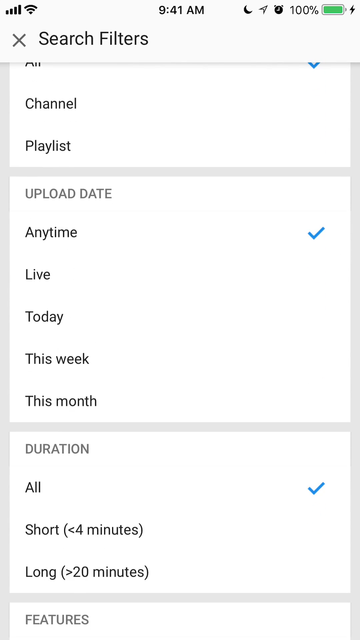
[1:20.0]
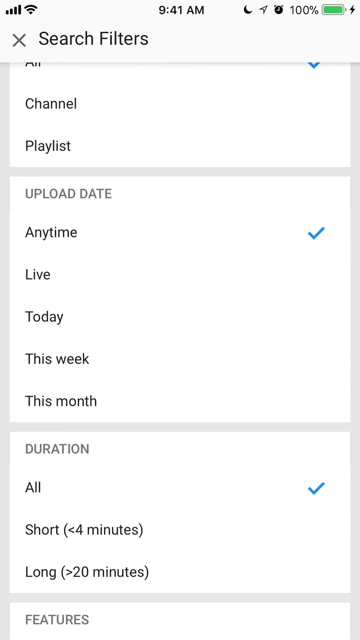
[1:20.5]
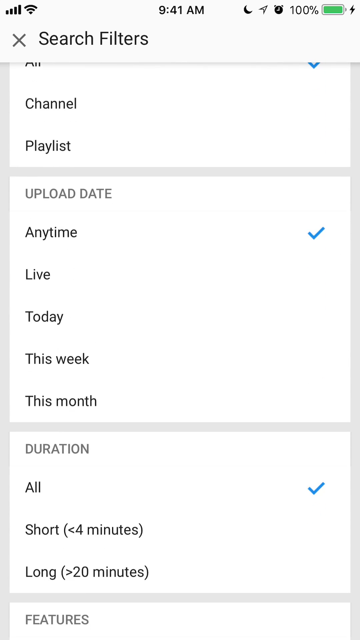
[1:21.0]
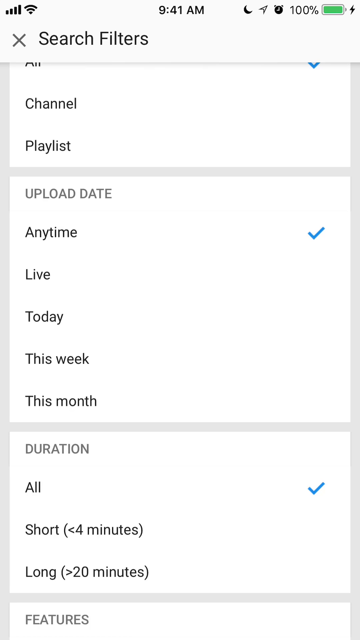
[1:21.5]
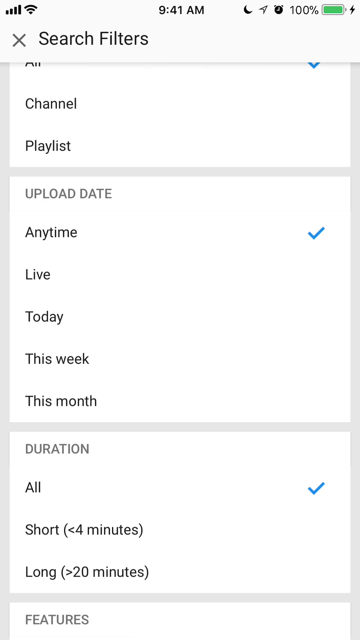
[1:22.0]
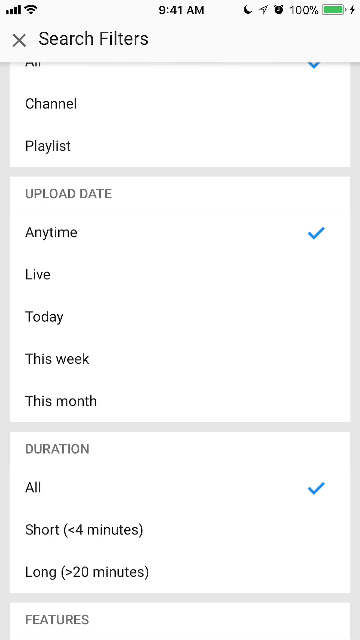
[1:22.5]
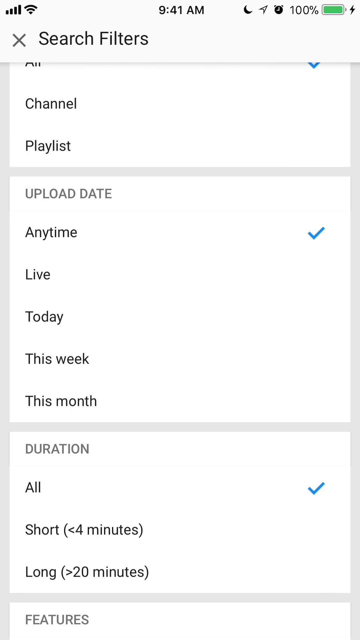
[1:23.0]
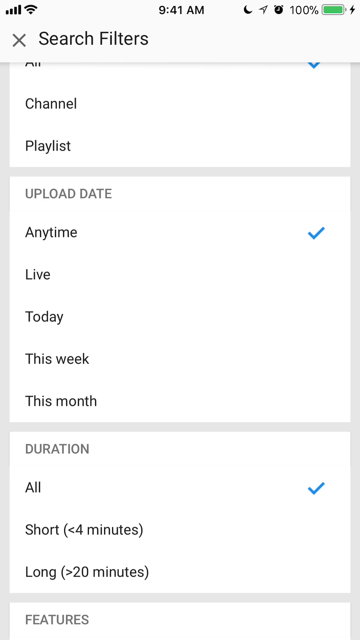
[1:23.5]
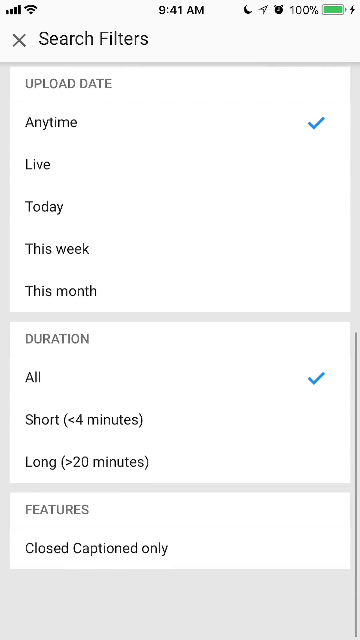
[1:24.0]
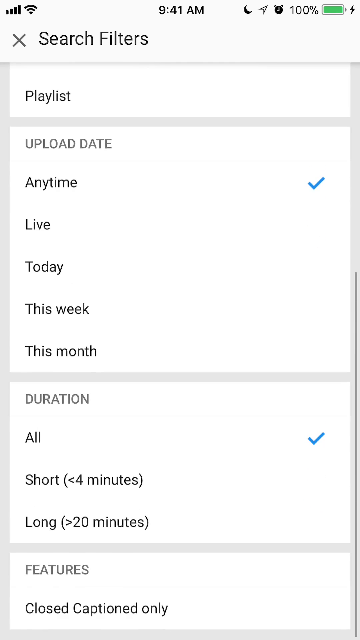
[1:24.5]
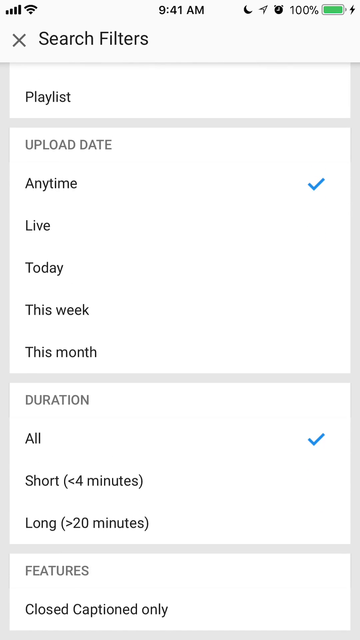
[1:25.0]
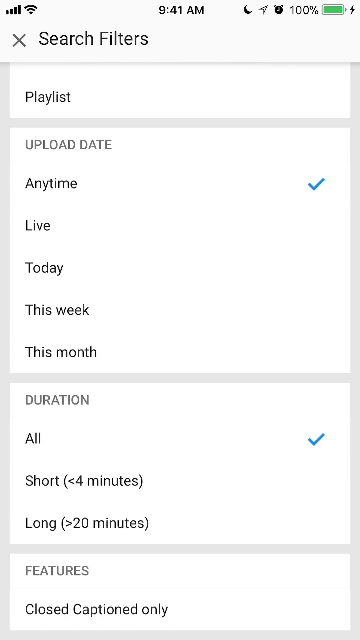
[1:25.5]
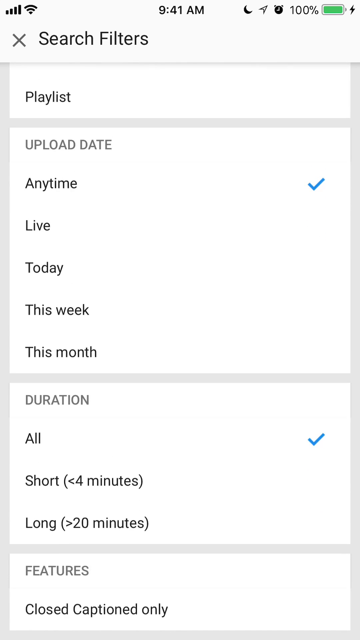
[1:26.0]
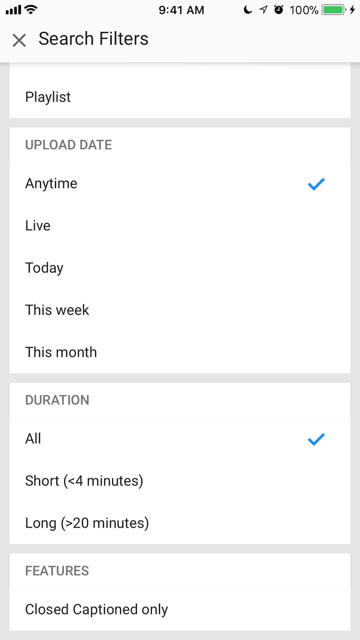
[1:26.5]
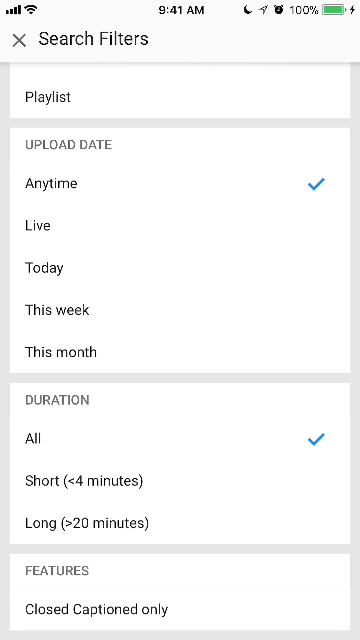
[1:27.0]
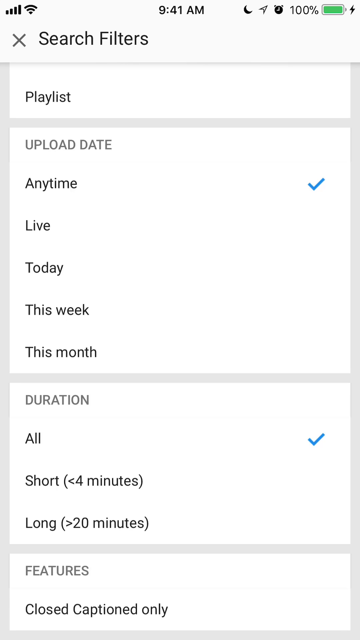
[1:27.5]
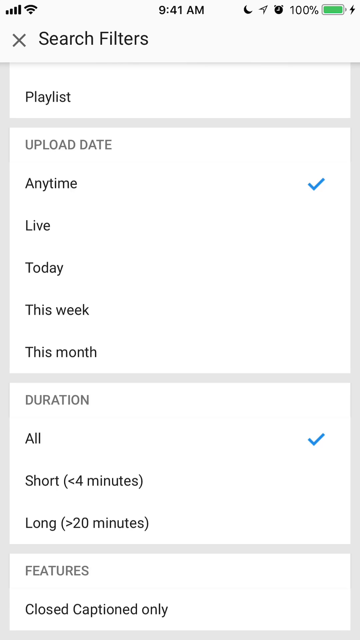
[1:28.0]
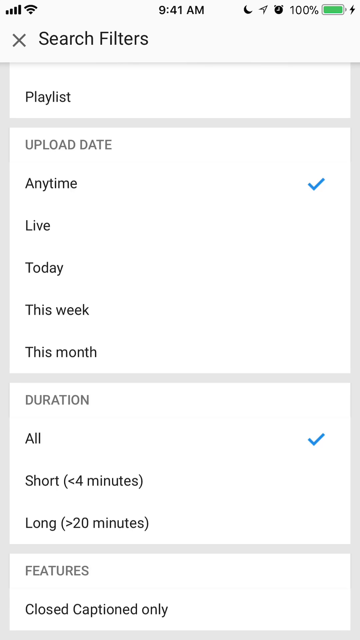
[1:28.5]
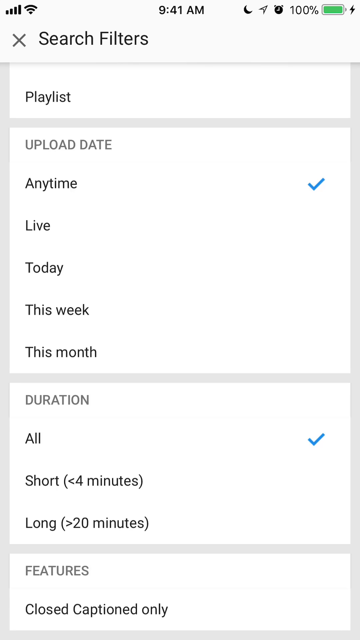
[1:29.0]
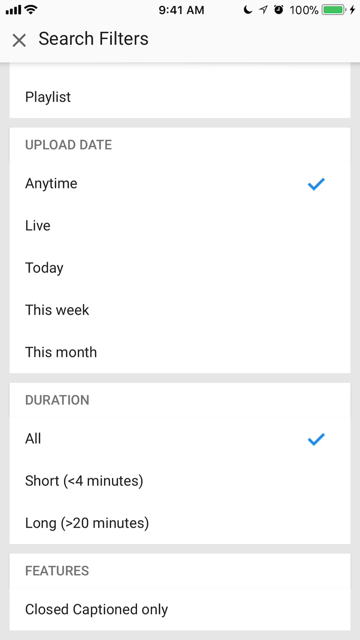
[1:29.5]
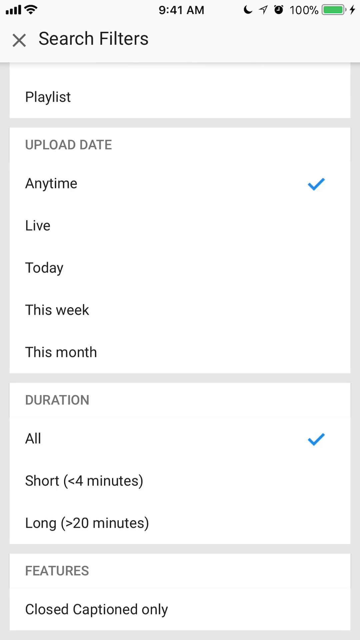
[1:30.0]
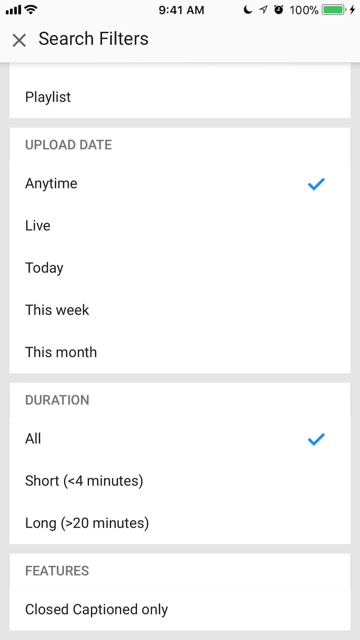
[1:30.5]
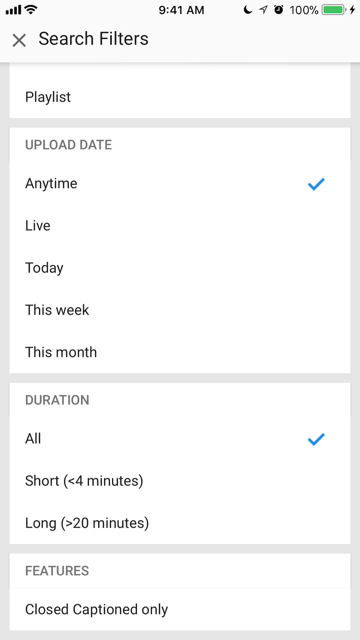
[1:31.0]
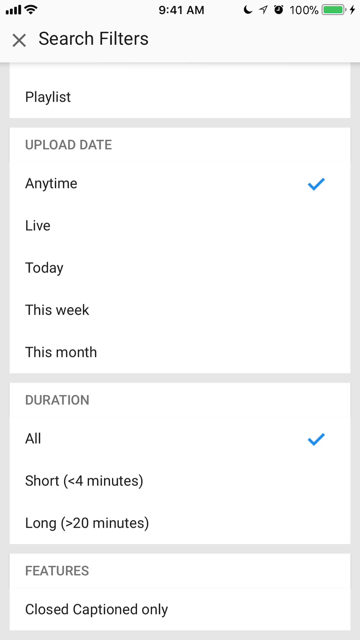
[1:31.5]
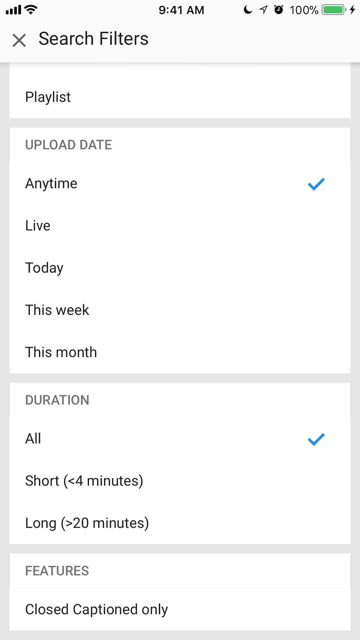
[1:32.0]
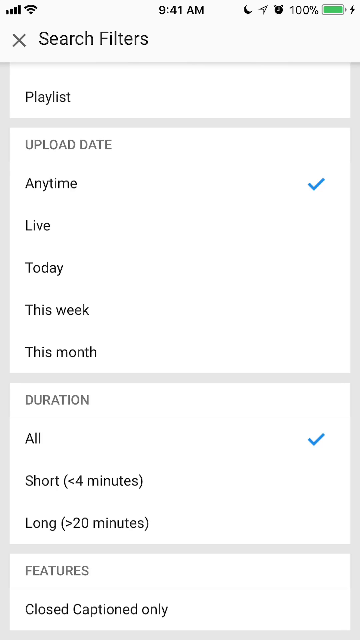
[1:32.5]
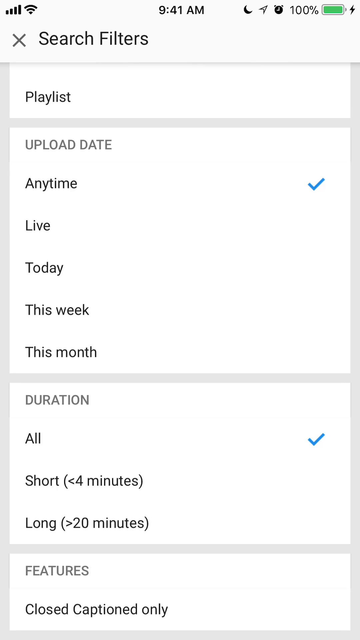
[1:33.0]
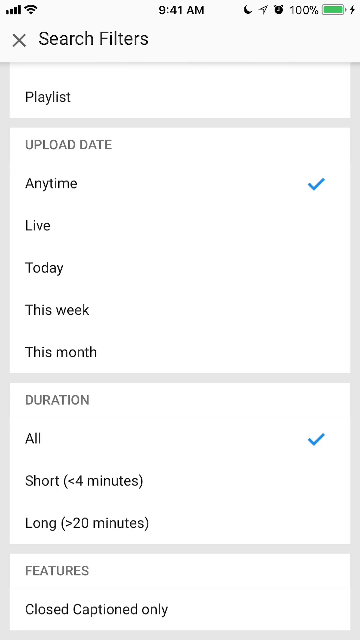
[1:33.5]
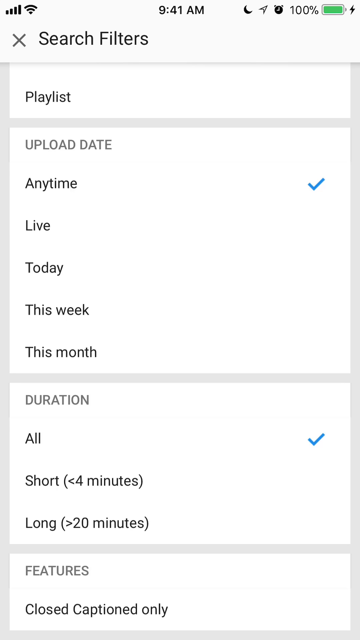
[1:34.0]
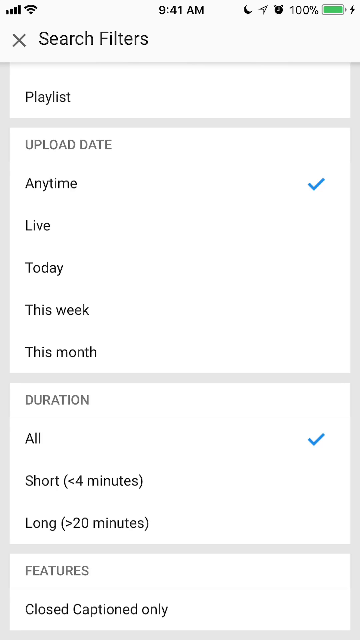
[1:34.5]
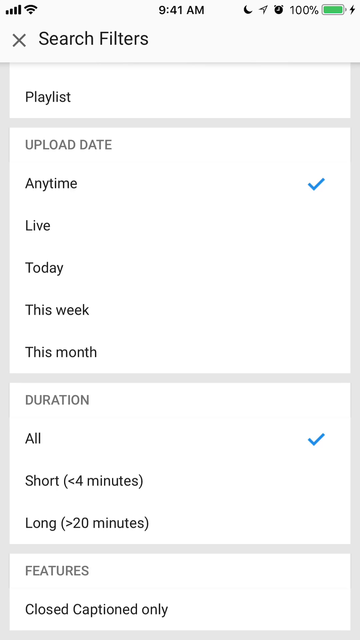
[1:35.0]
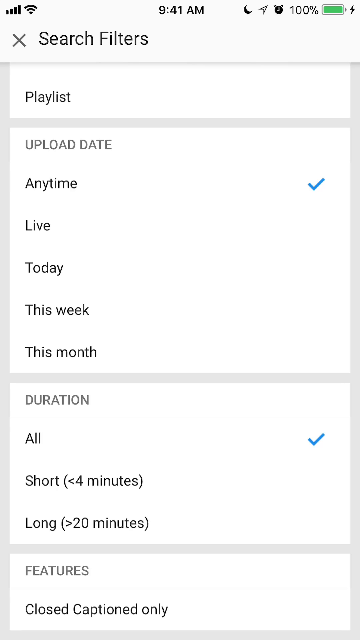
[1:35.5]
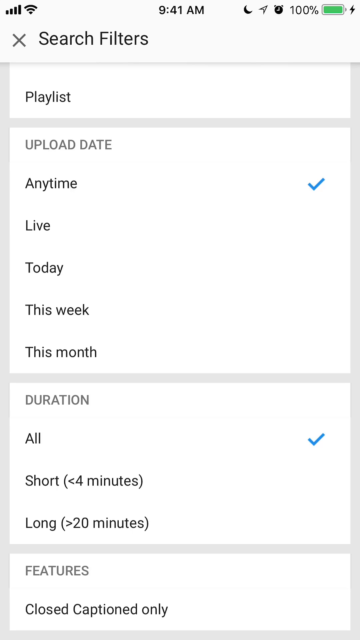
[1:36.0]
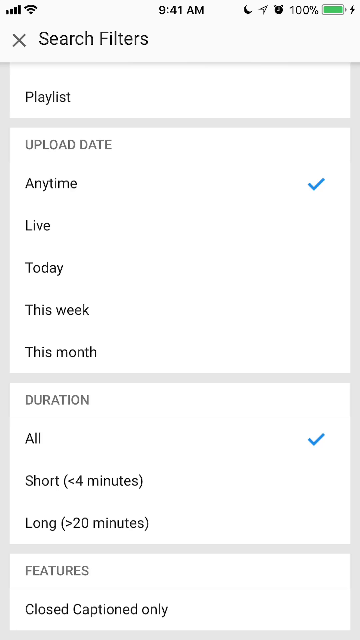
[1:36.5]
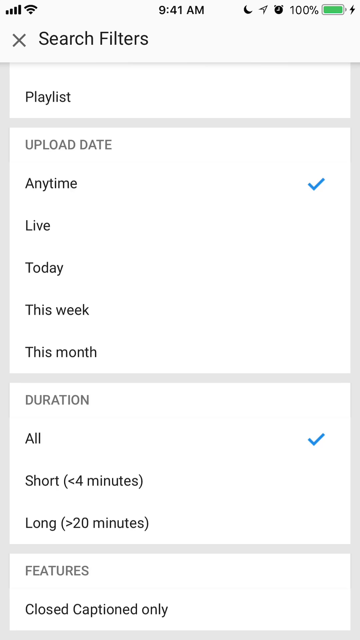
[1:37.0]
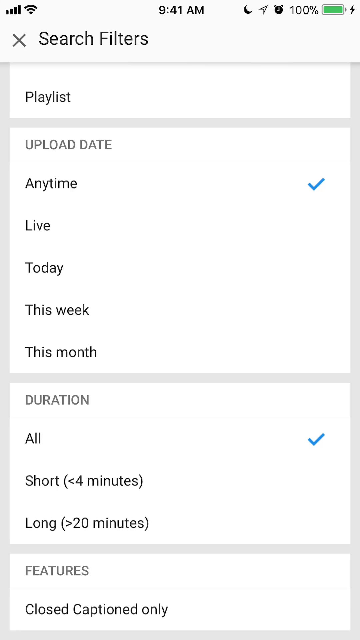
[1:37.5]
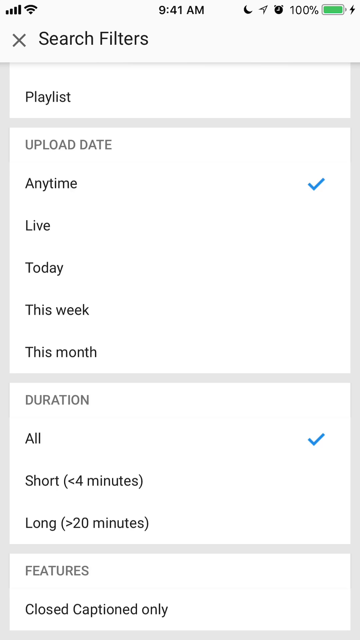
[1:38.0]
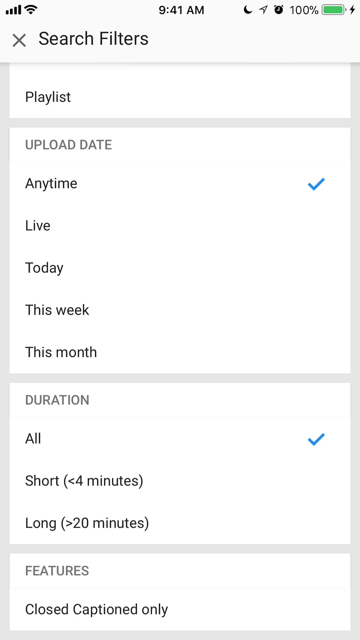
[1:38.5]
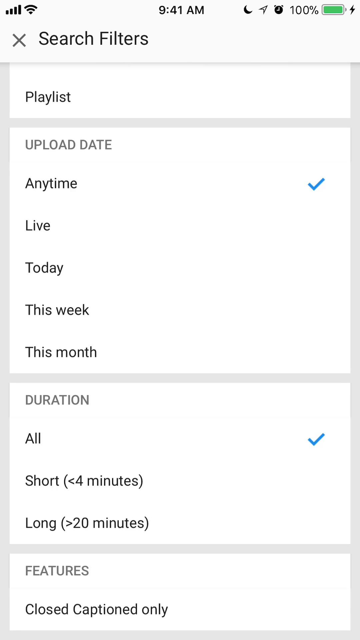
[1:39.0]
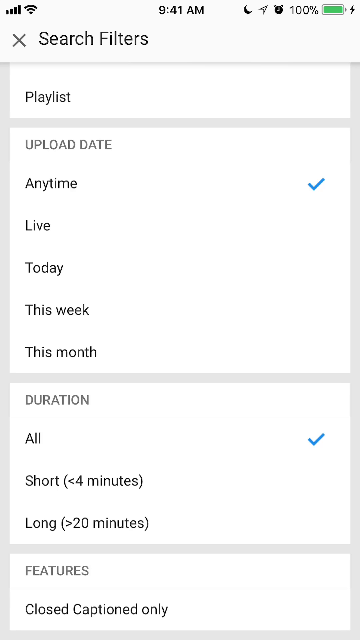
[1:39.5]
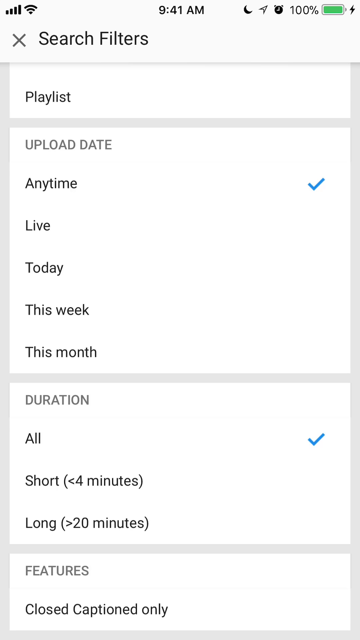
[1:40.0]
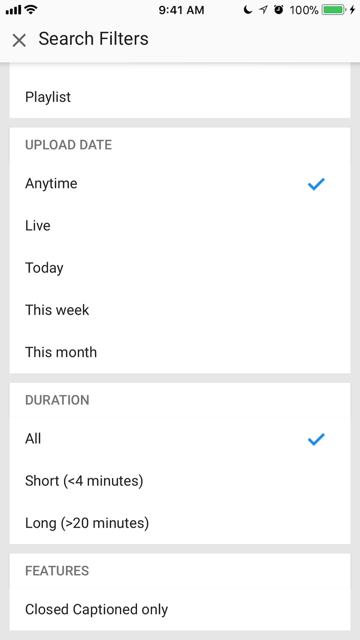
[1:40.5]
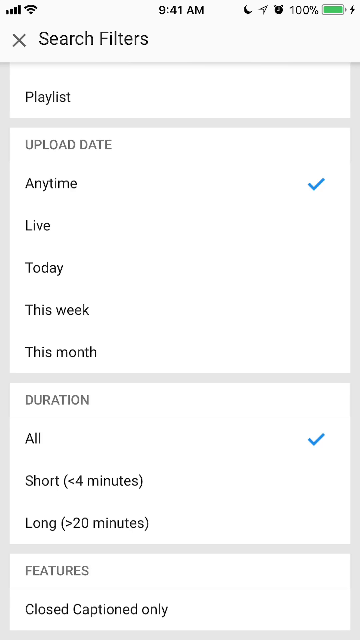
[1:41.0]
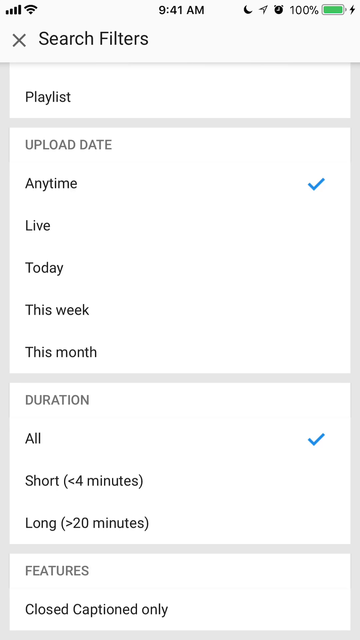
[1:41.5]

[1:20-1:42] The search filters view of the YouTube app on the iPhone is shown as the user scrolls up and down, reaching a view with the options Upload Date, Duration and Features. Upload Date offers anytime, live, today, this week and this month; Duration offers All, Short and Long. The Features options are not visible, as further scrolling would be needed. The screen then stays at the same scroll position. The selected options are upload date anytime and duration all, while the selected feature cannot be seen. The user may be going through all the available search filter options.